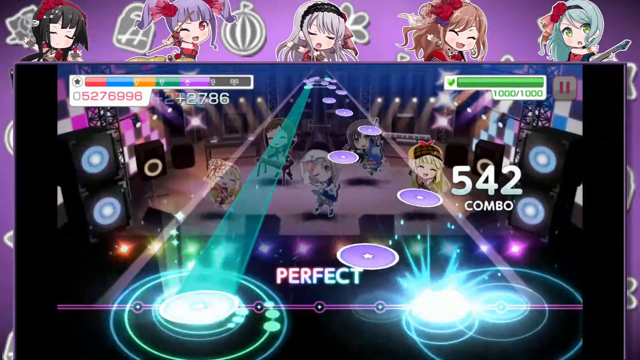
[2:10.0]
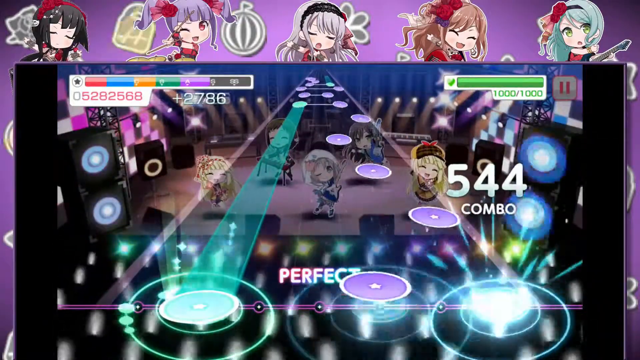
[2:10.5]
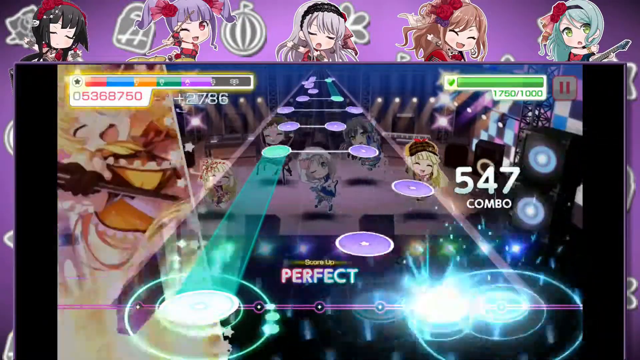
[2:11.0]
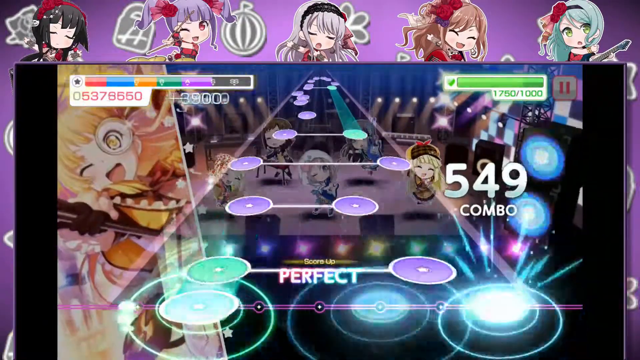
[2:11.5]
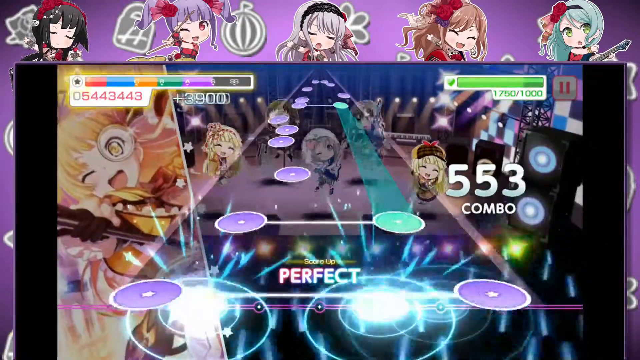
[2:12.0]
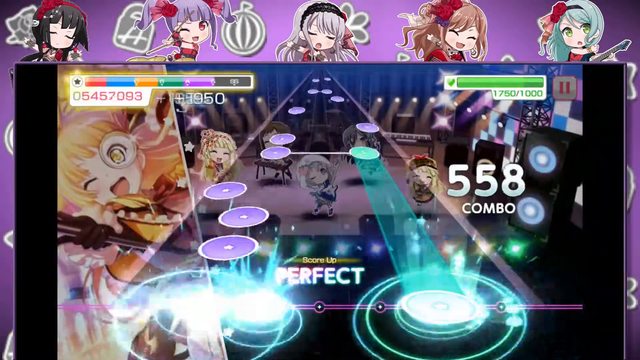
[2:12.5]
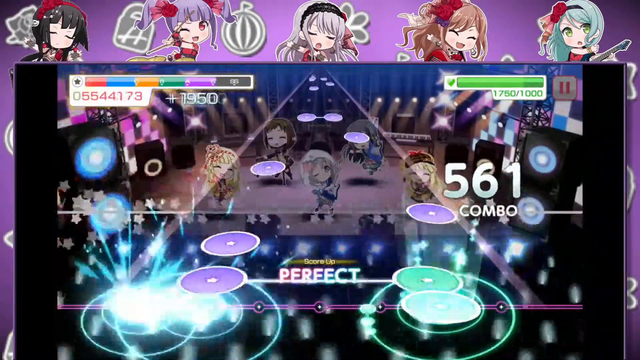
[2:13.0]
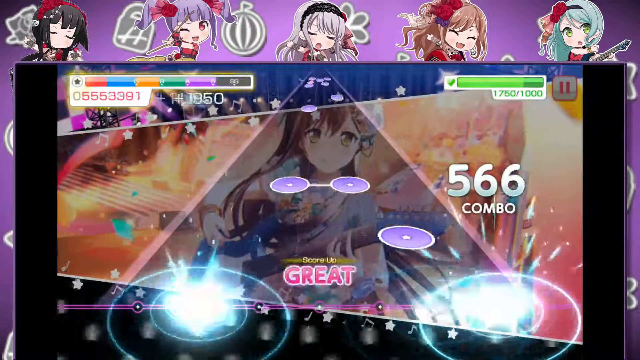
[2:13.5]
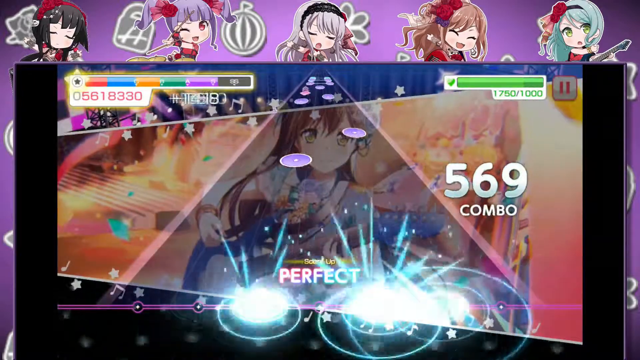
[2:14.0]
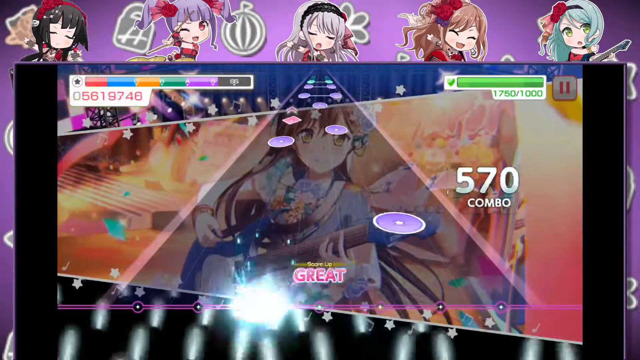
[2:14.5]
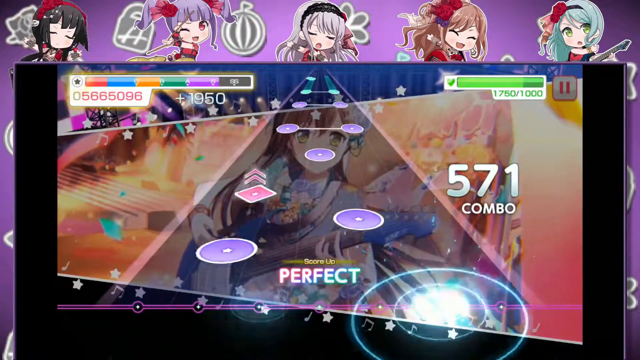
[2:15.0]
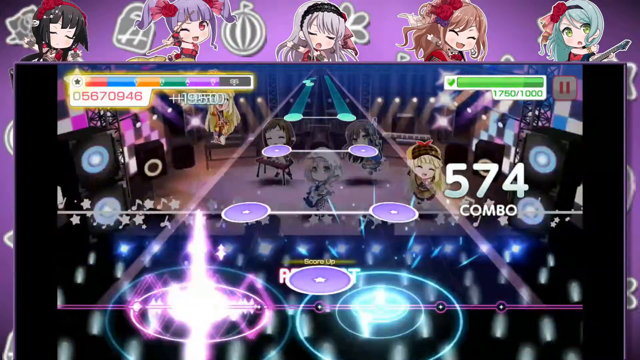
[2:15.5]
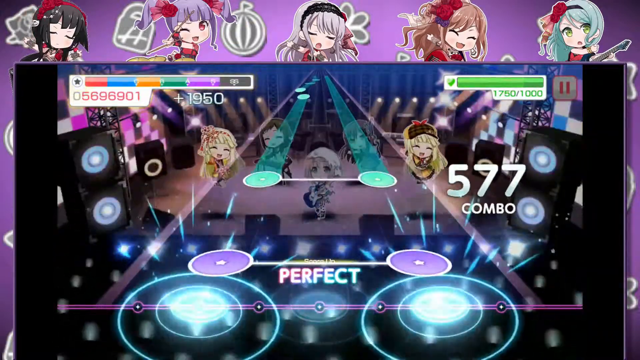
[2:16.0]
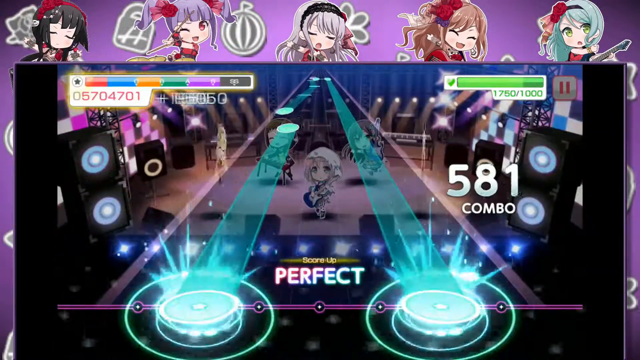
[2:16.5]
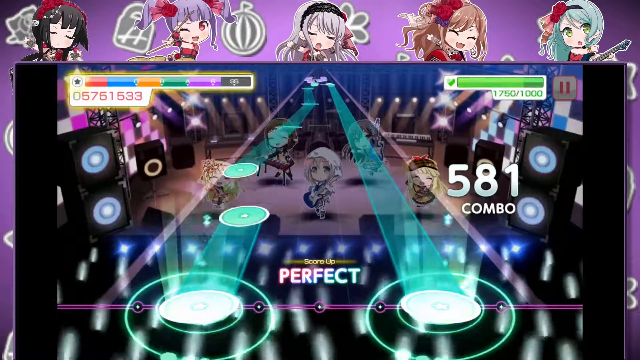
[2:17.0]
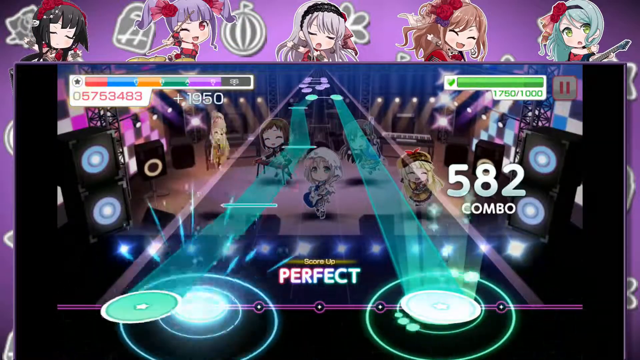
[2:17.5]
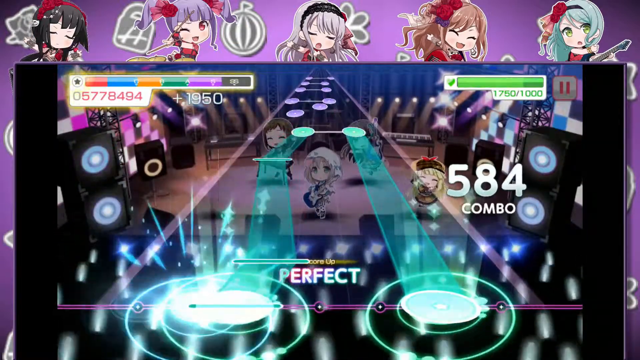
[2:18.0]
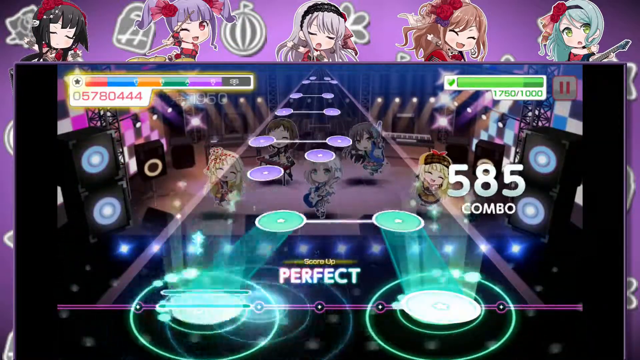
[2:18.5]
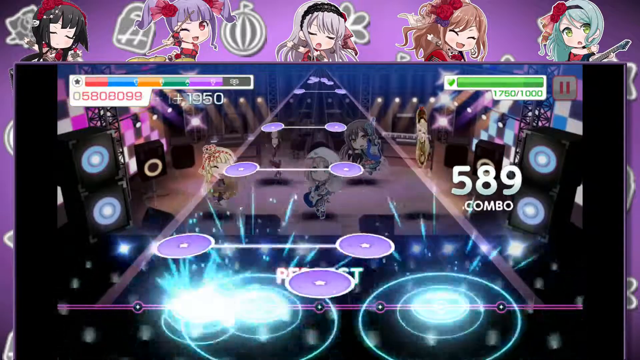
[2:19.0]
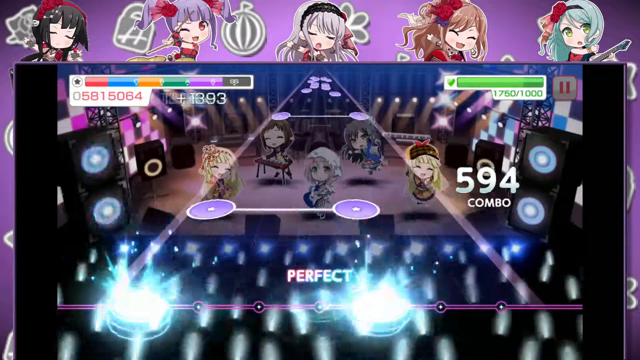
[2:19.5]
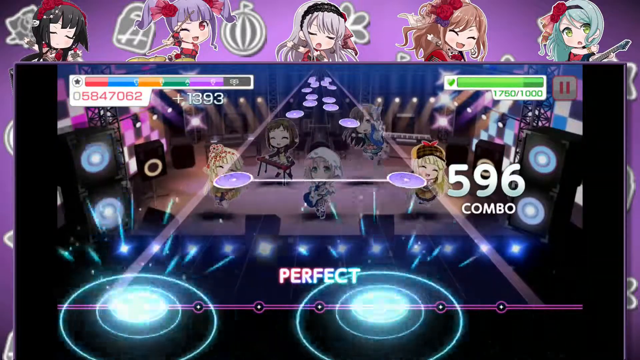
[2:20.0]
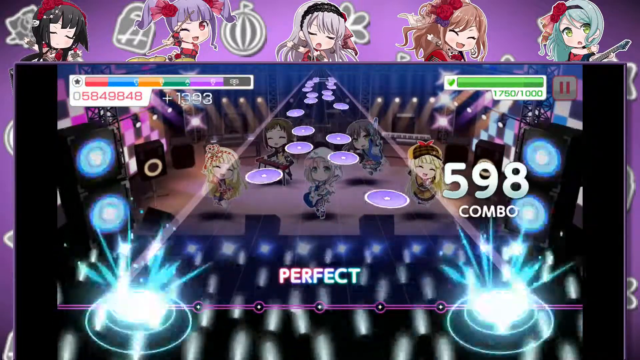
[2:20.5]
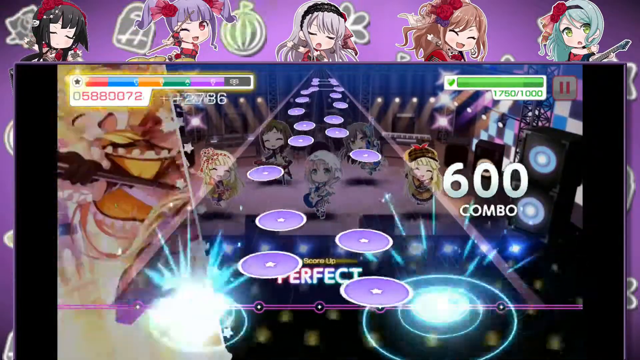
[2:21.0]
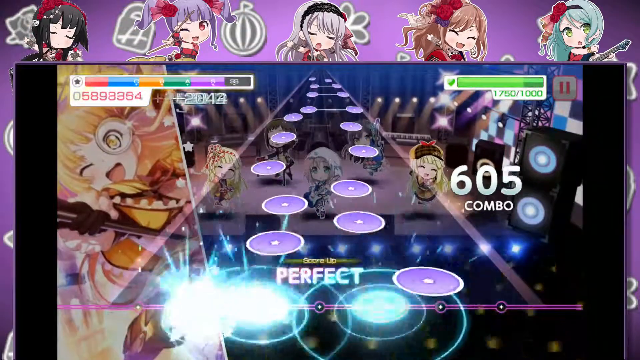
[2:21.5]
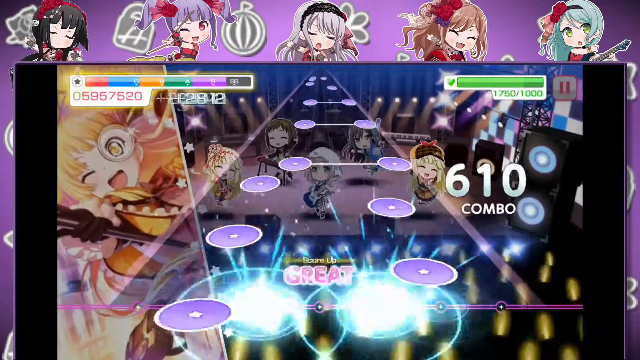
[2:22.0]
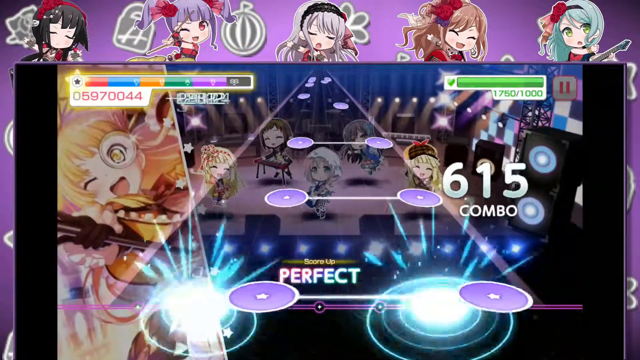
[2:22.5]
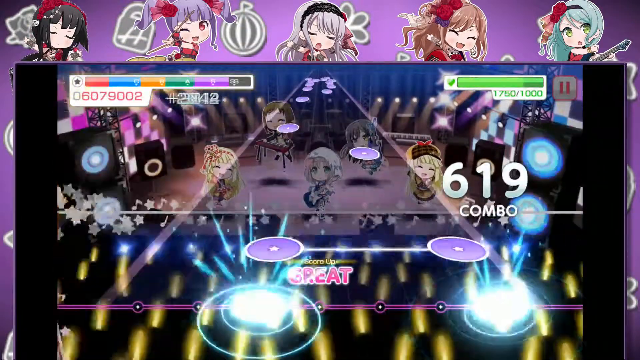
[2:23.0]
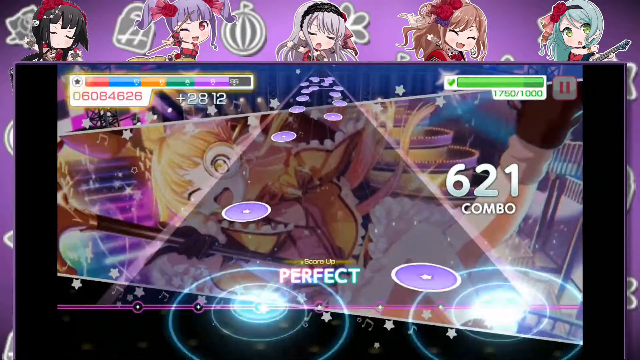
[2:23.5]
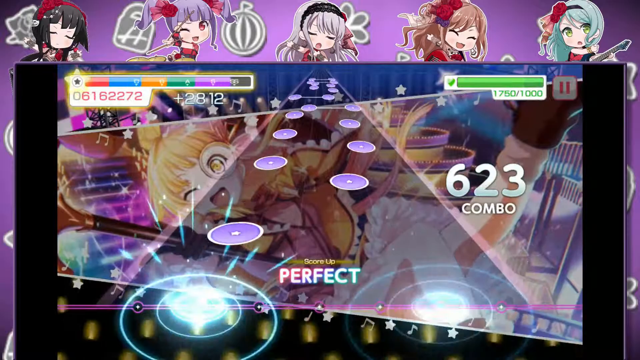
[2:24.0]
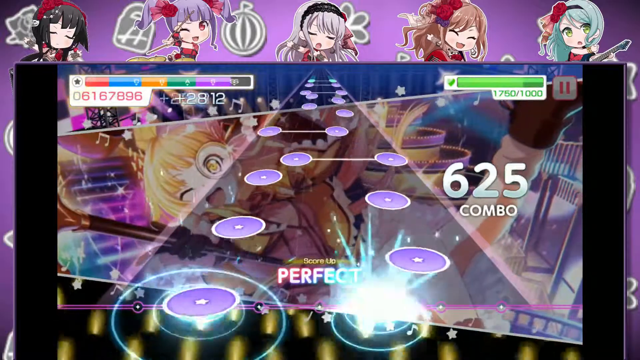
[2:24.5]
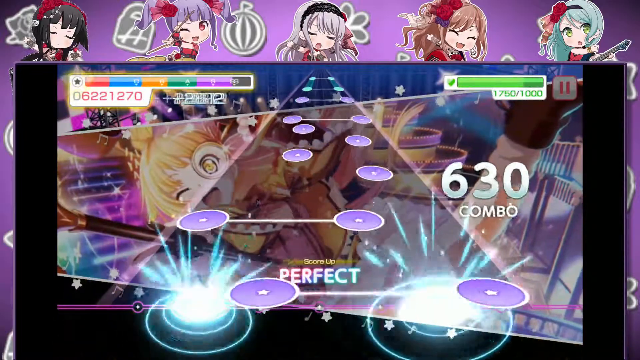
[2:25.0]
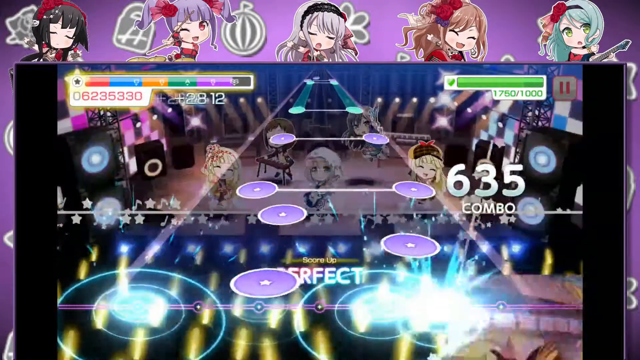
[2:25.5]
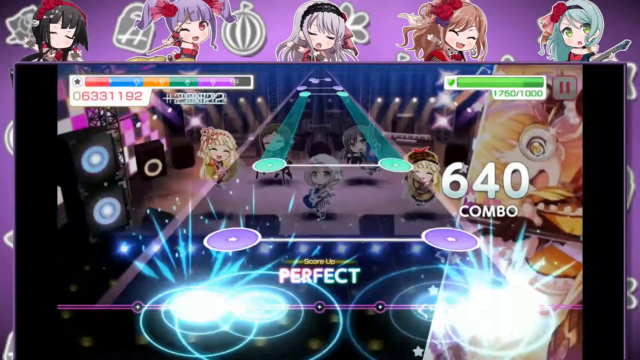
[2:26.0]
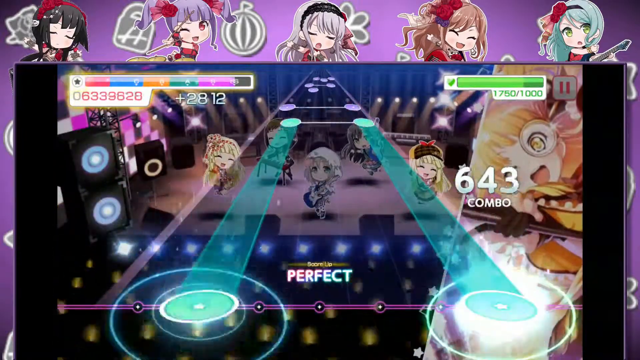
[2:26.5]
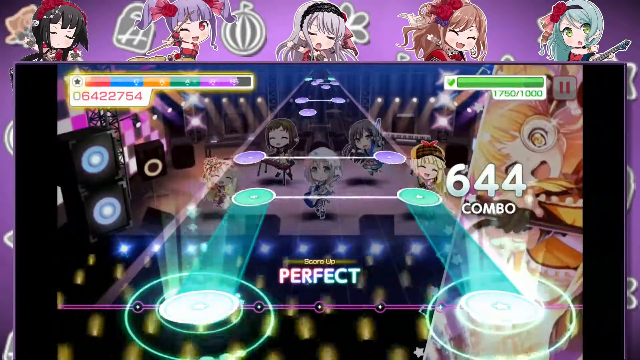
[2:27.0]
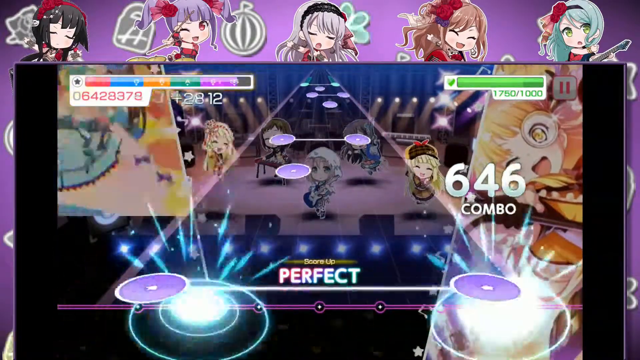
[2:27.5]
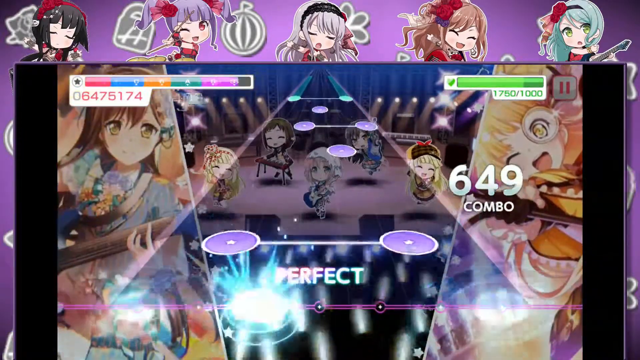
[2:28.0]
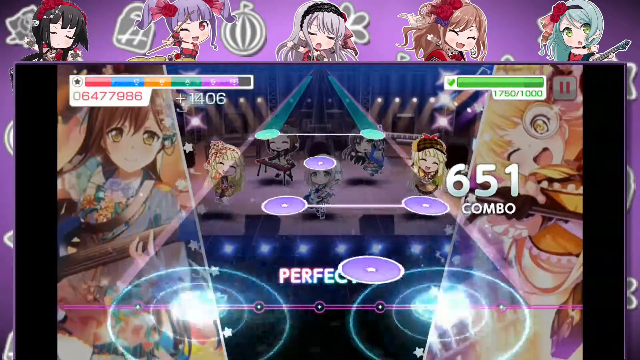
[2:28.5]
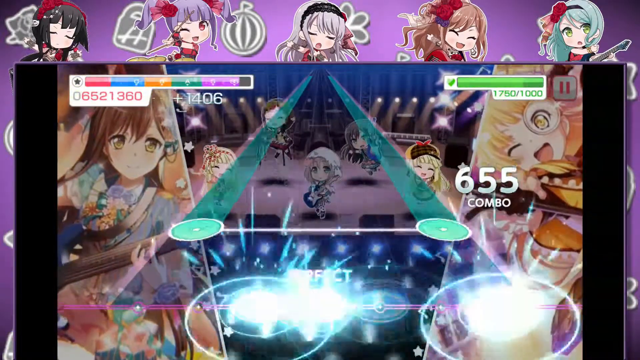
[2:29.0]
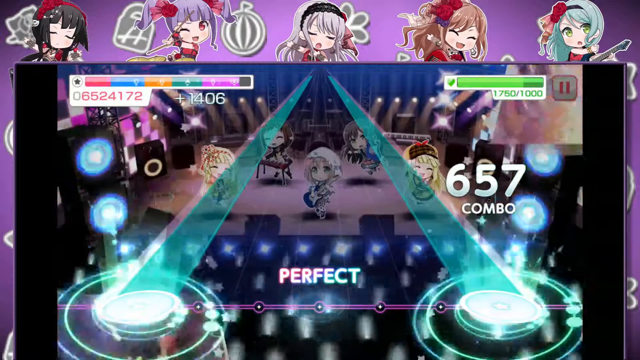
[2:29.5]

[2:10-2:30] A mobile video game, possibly a music rhythm game, is being played. On screen is the shape of a guitar with traveling buttons that are pressed when they reach the bottom of the screen; pressed with the correct timing, they light up and create some kind of light effect. As the game progresses, cutscenes of anime girls appear at the back of the screen, with an anime band of chibi girls playing in the background. First a blonde girl in a yellow dress appears, then a girl playing a blue guitar, wearing a blue dress, with long brown hair and green eyes. The cutscene fades out quickly and the game continues, with the player pressing buttons and the combo reaching 600. The girl in yellow then appears again in a vertical cutout, then in a horizontal cutout, seemingly playing an instrument that cannot be seen clearly, then again in a vertical cutout together with the brown-haired girl seen before.